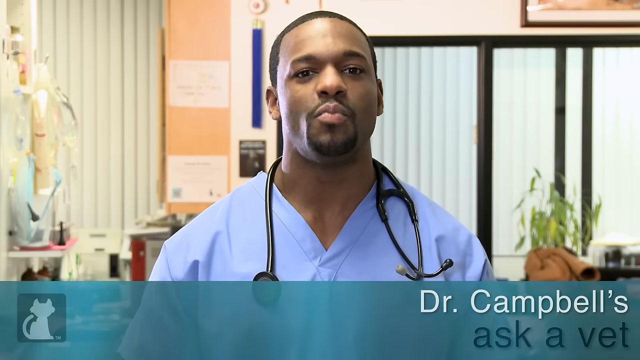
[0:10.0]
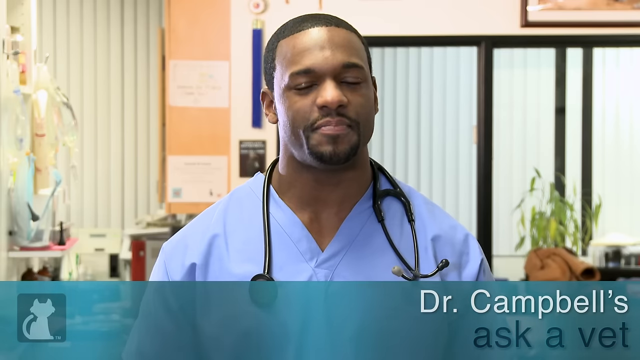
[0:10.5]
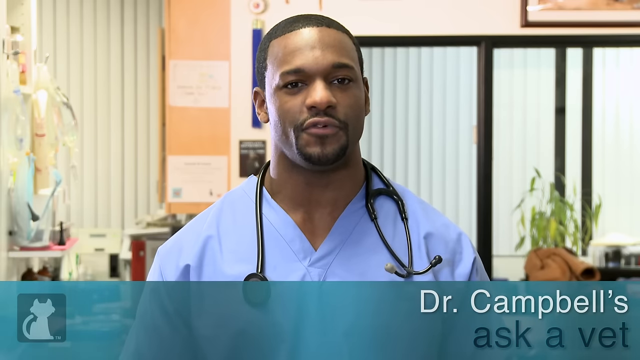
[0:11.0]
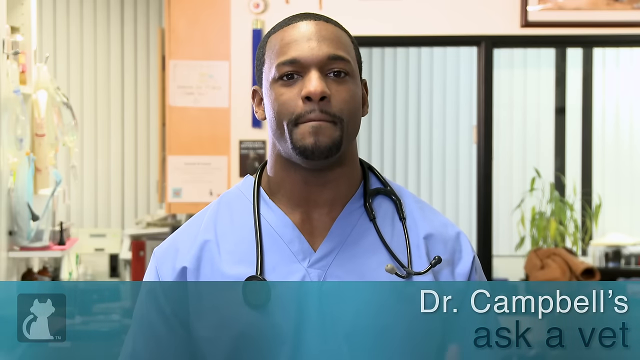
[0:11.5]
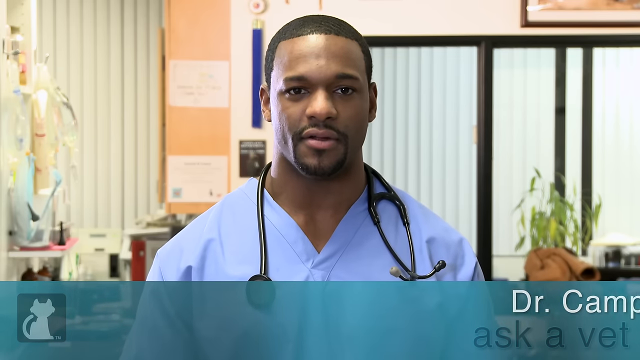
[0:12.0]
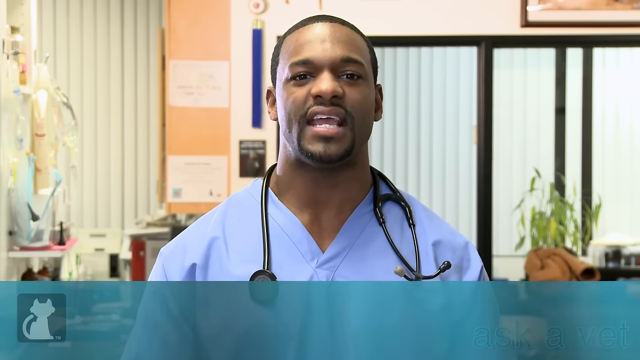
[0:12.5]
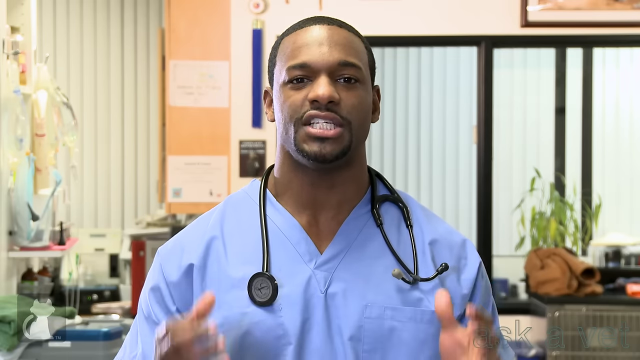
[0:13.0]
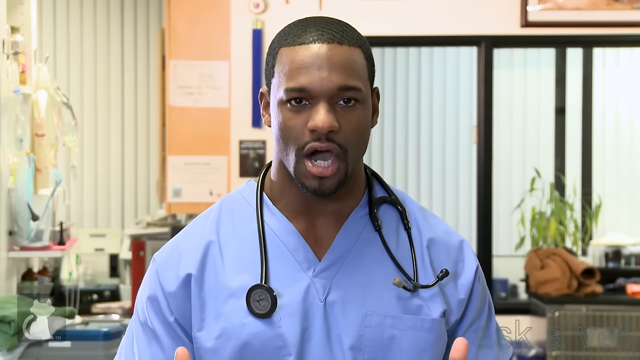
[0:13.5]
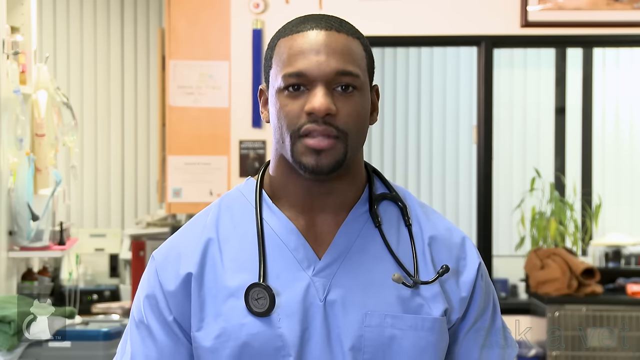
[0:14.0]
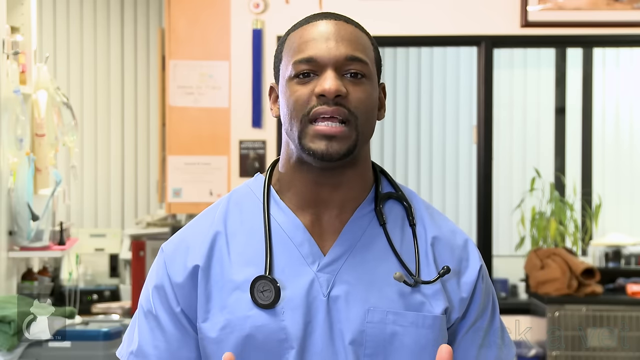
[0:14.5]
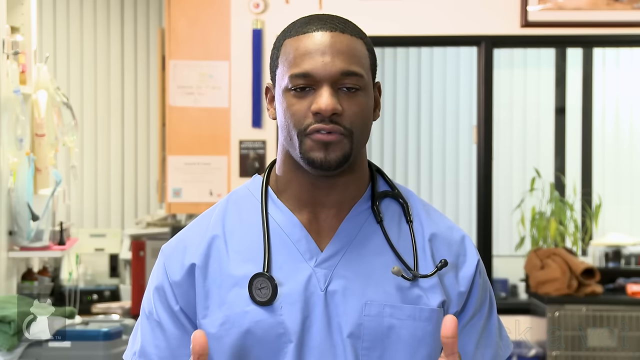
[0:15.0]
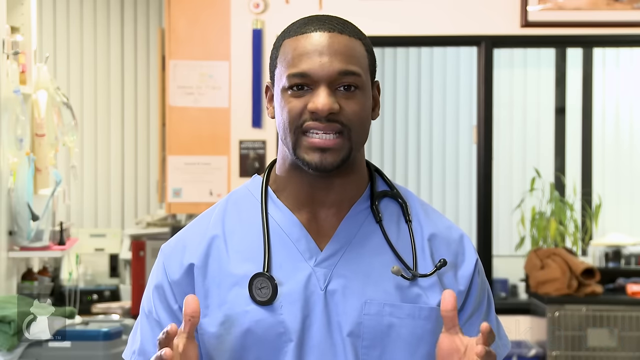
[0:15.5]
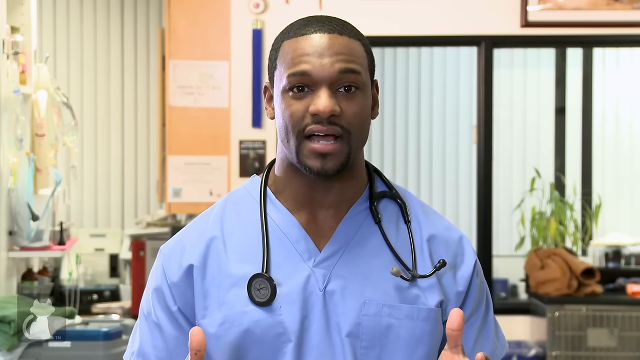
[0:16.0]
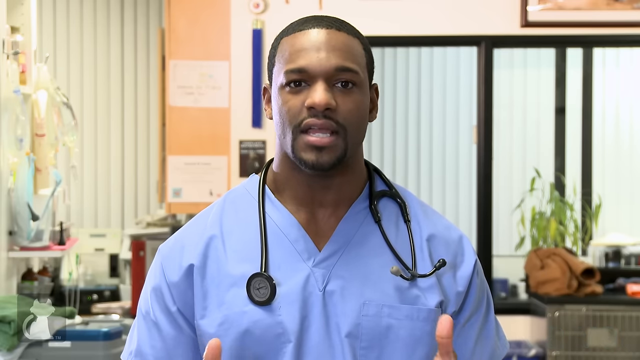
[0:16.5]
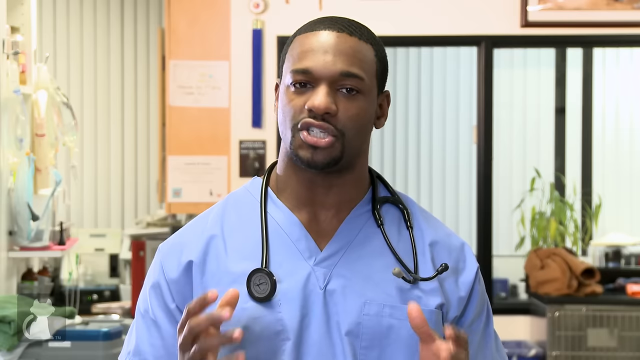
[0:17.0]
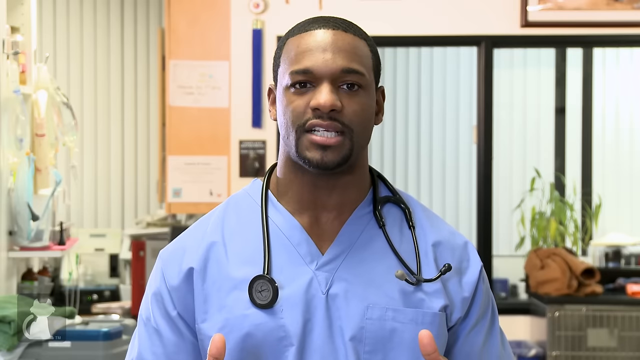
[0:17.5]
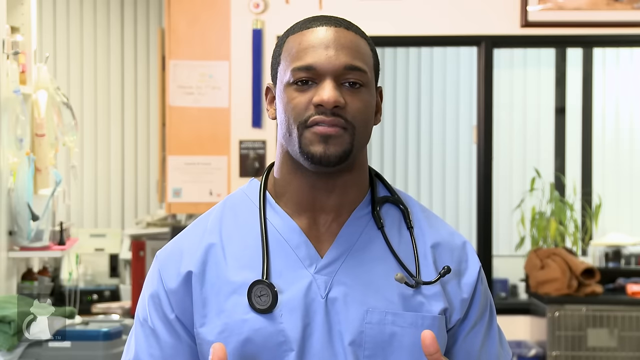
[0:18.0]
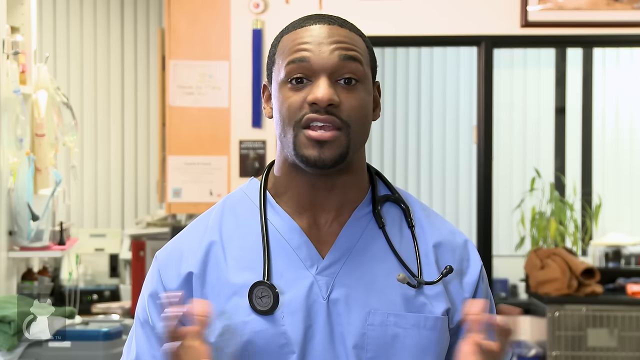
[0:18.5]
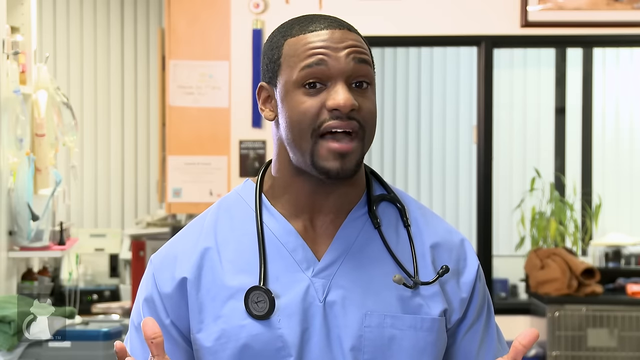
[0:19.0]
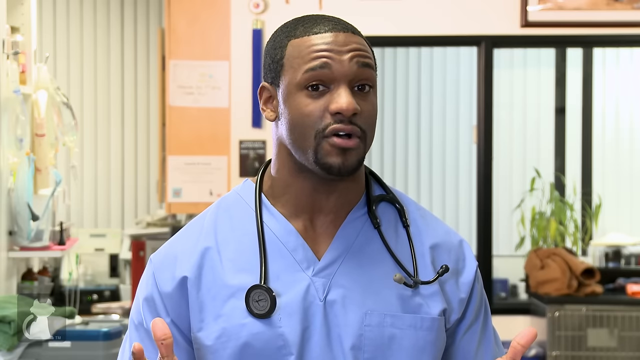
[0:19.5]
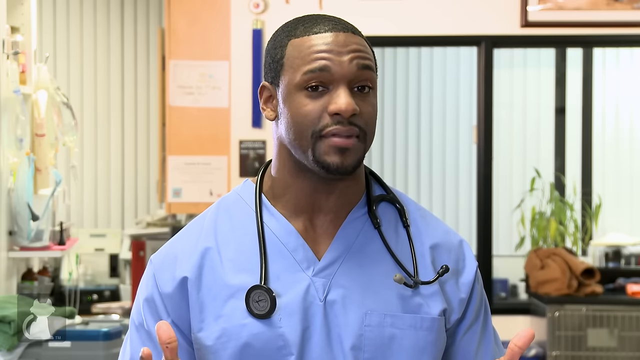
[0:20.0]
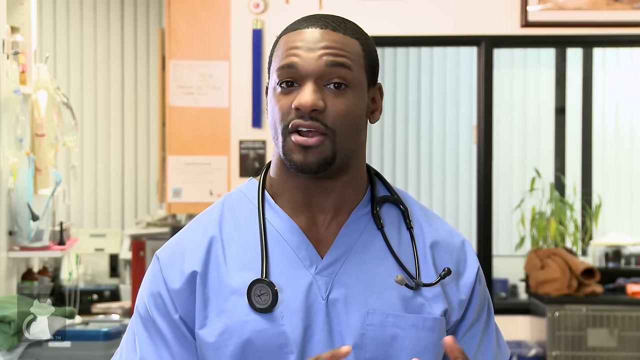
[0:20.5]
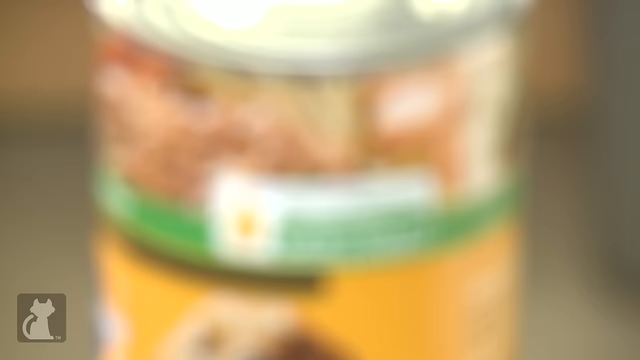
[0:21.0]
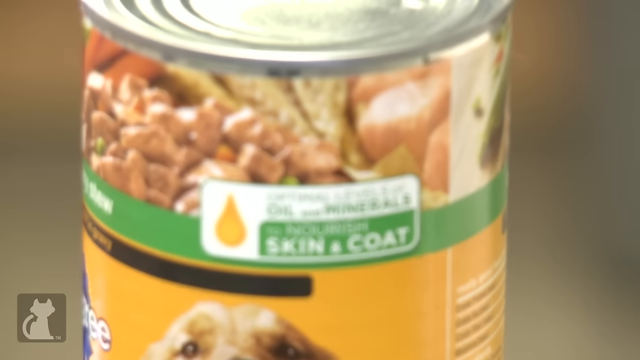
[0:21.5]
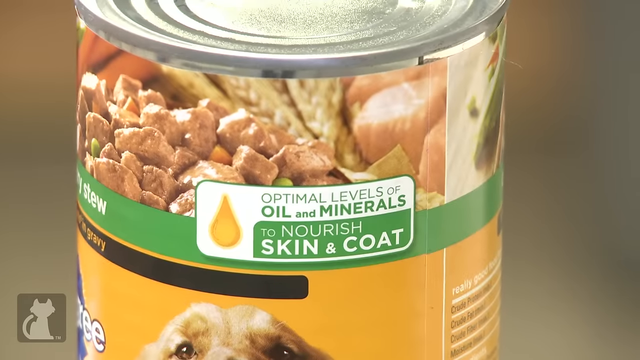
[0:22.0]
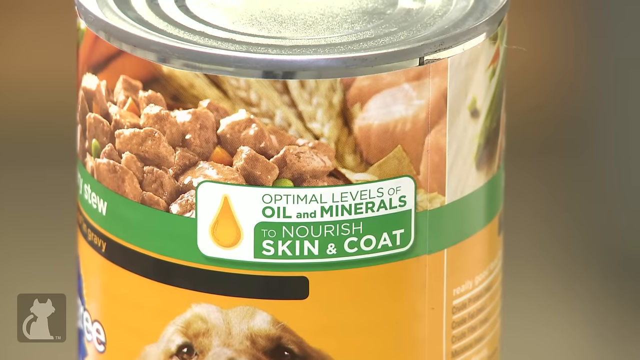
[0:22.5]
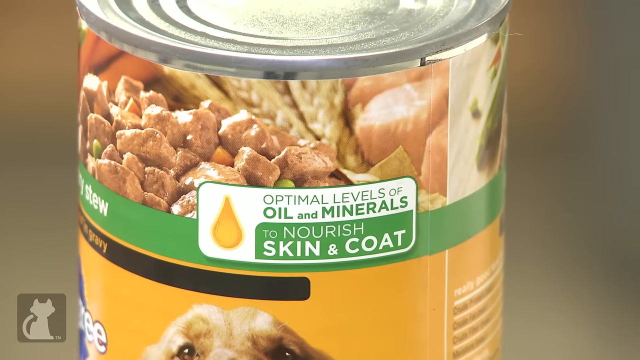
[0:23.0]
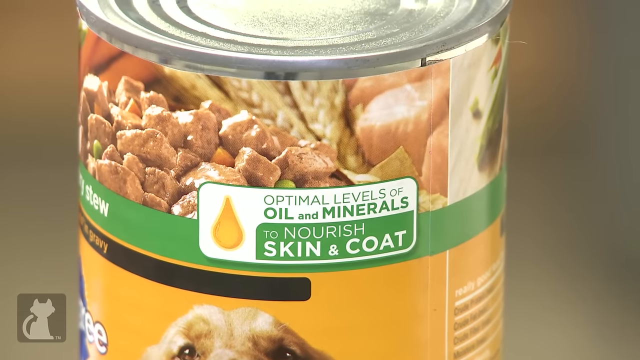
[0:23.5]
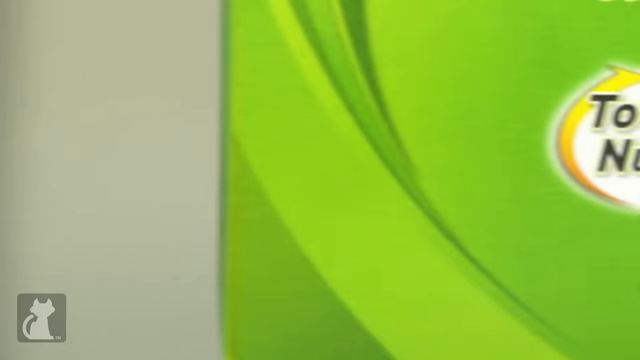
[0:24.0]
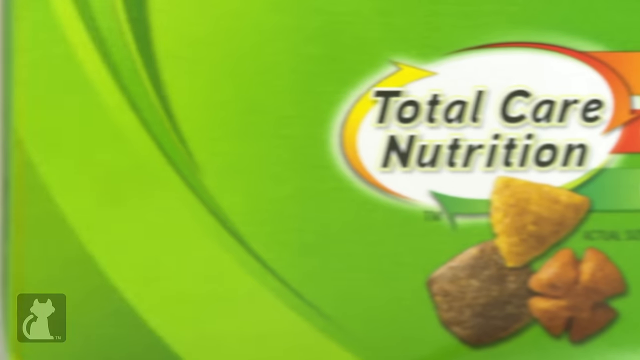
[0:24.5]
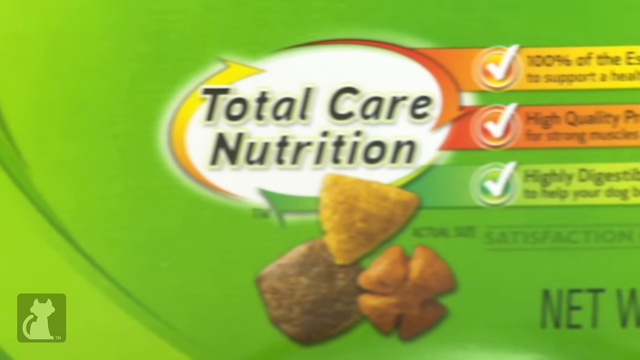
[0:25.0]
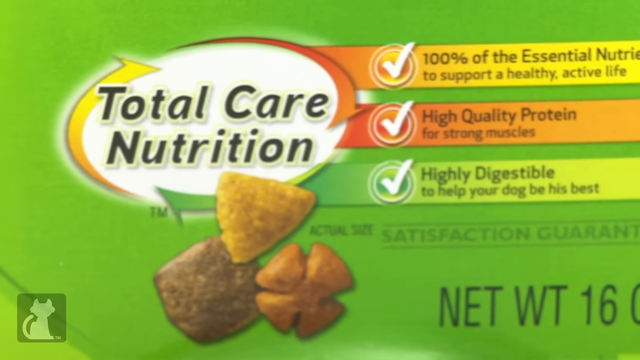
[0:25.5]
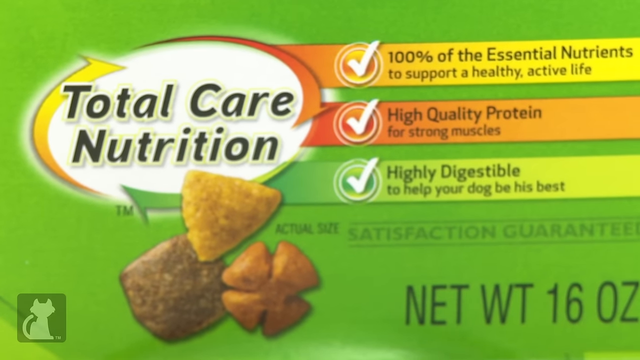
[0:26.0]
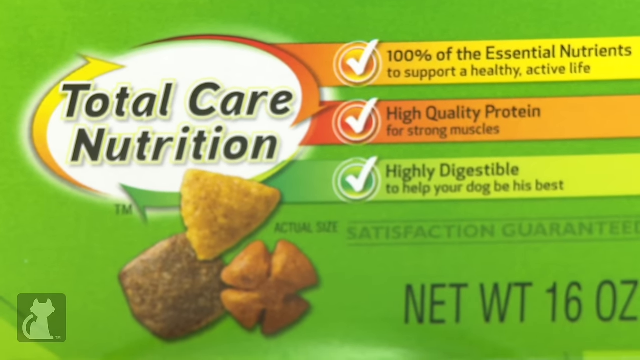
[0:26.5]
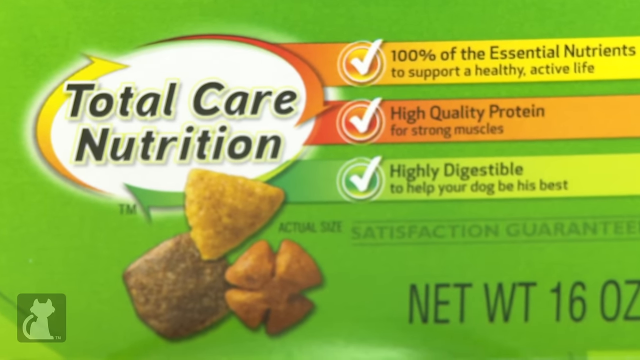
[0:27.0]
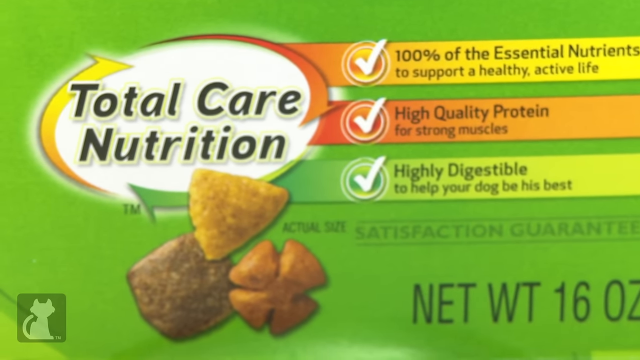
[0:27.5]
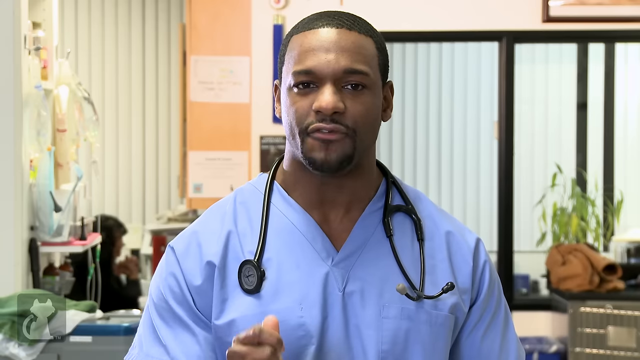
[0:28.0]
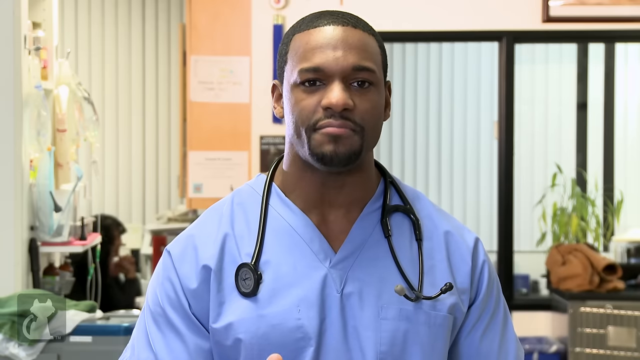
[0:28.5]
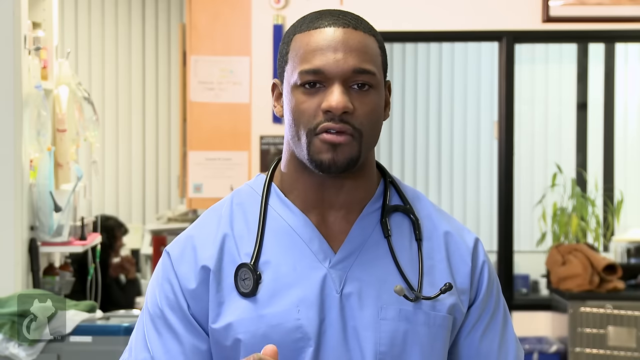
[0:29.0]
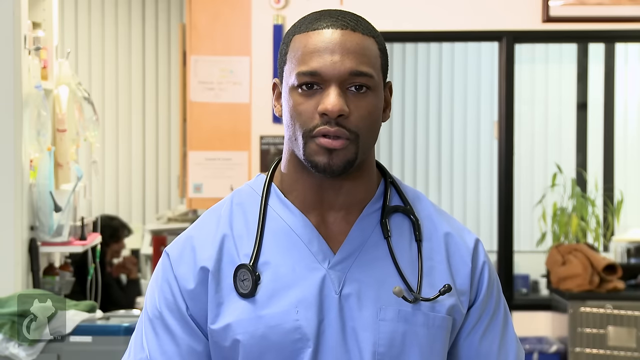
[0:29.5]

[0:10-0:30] A male medical worker wears scrubs with his stethoscope draped around his neck. Behind him is a glass sliding door with a black metal frame. A green potted plant with lots of pale green leaves is on a cabinet behind him to the right, and drapes run along the wall to the left and beyond the sliding glass door. He is a Black man with a well-trimmed moustache and close-cropped hair, and he looks quite handsome. He speaks, gesturing with his hands, framed from the head to the chest. He continues talking, looking quite serious, and at one point shakes his head as if to emphasize the seriousness of what he is saying. Next, a can of dog food appears. Its upper part shows an image of chopped meat, and a green strip runs around the circumference in the middle. A label on the front of the can says "optimal levels of oil and minerals to nourish skin and coat." The can stays in view for about two seconds. Then a close-up of a nutrition label shows "total care nutrition" written in a white circle on a green background, with details including "100% of essential nutrients," "high quality protein," "highly digestible," and "16 ounces." The man in blue scrubs then appears again, continuing to speak.